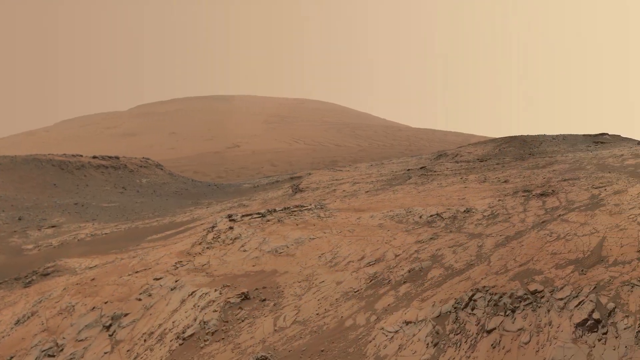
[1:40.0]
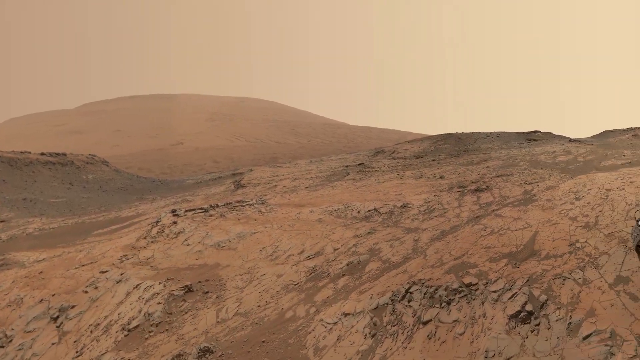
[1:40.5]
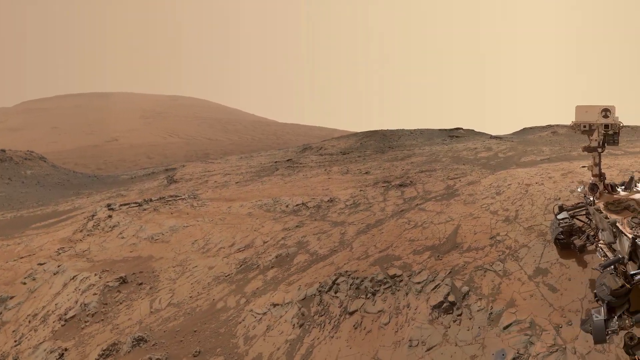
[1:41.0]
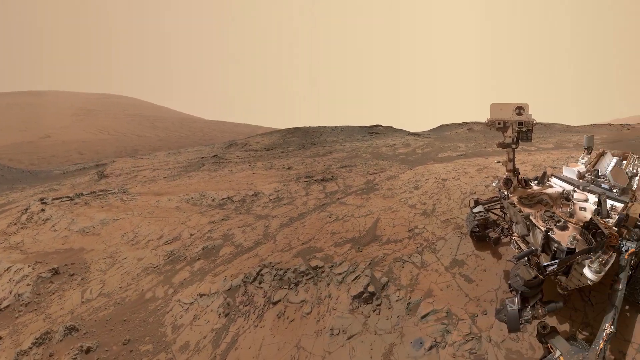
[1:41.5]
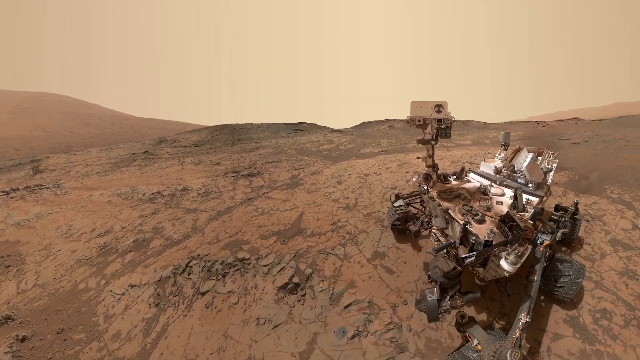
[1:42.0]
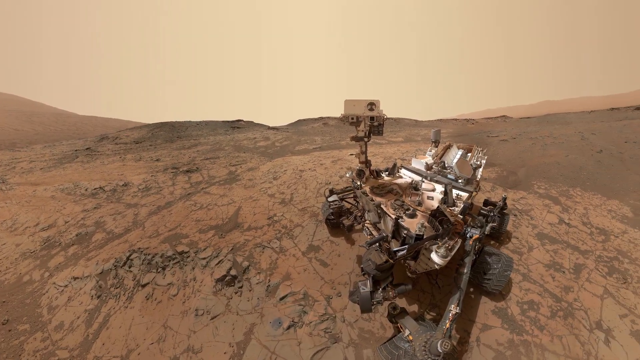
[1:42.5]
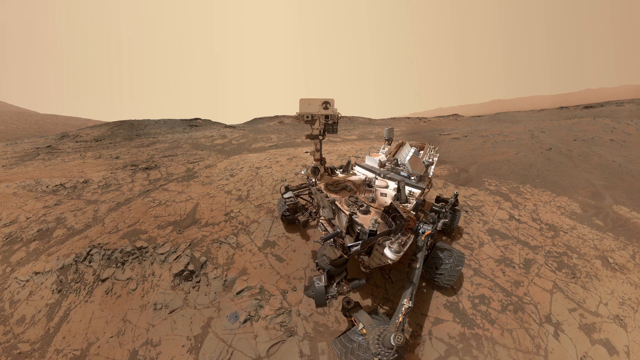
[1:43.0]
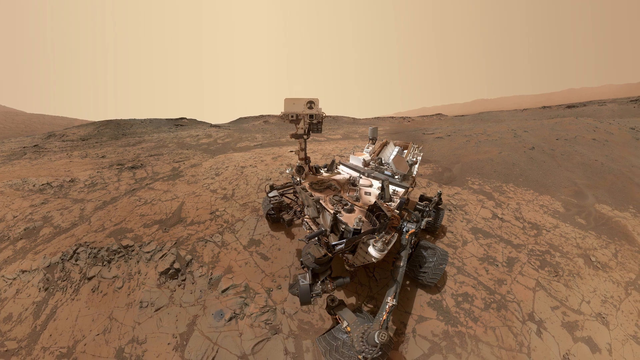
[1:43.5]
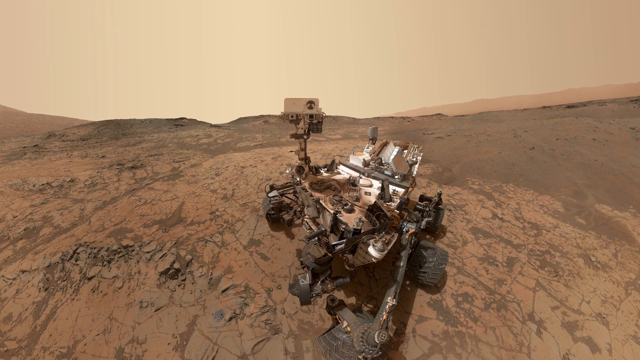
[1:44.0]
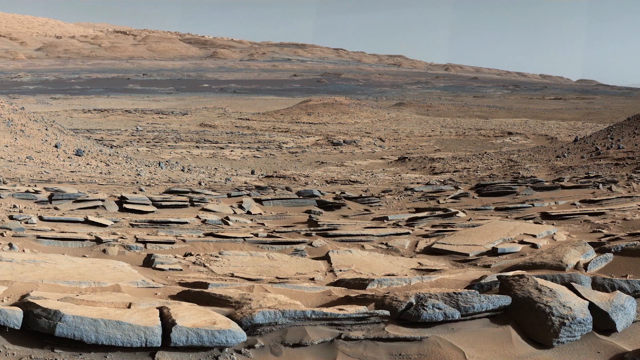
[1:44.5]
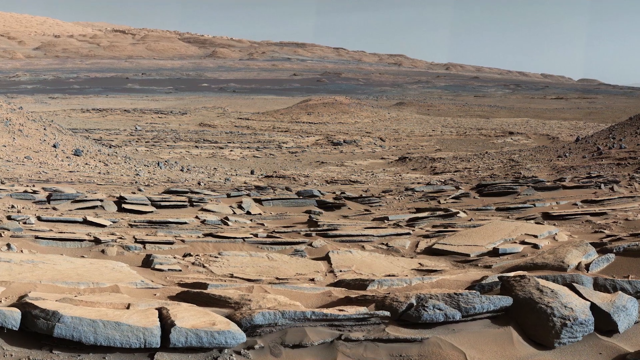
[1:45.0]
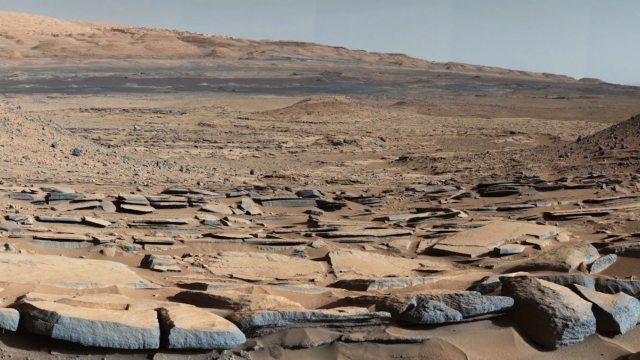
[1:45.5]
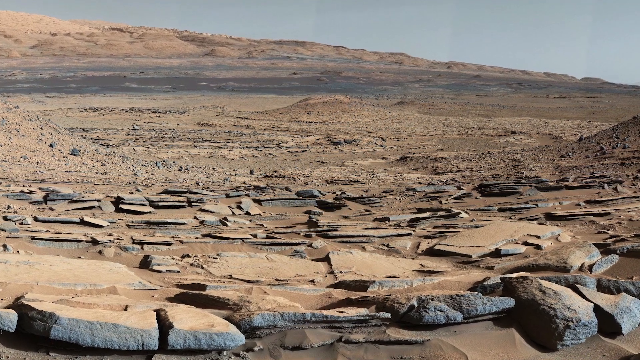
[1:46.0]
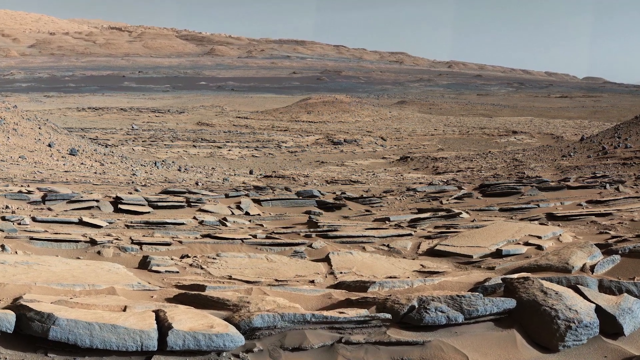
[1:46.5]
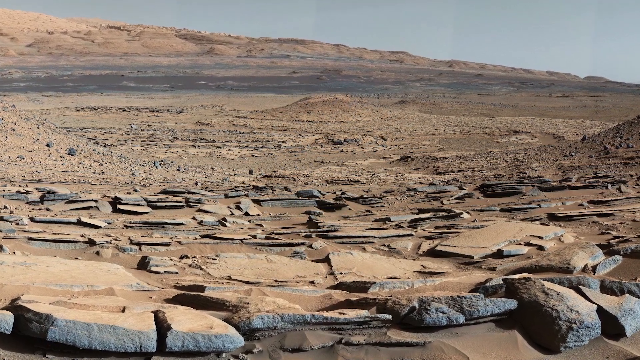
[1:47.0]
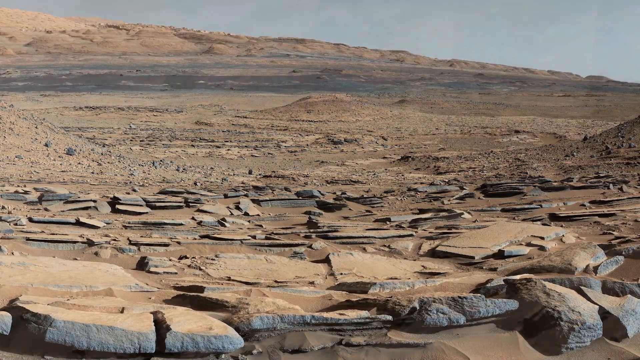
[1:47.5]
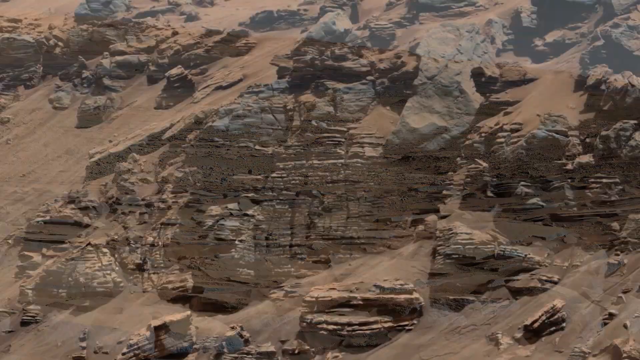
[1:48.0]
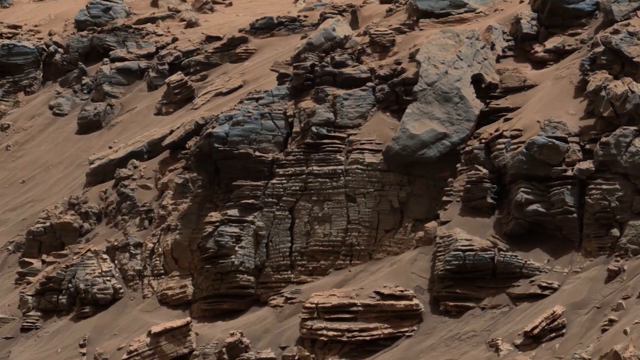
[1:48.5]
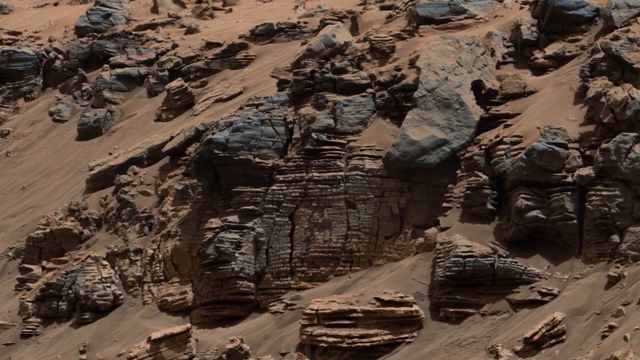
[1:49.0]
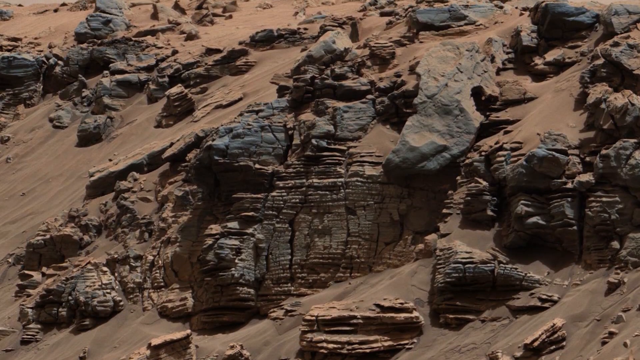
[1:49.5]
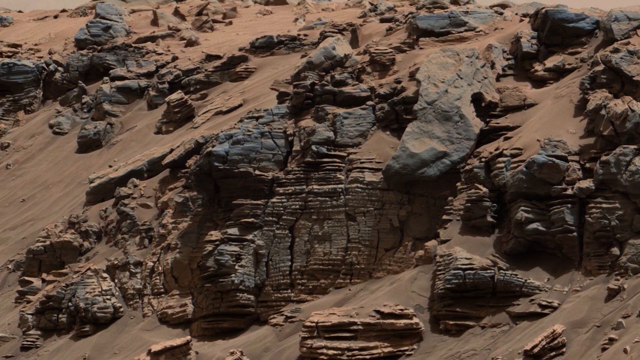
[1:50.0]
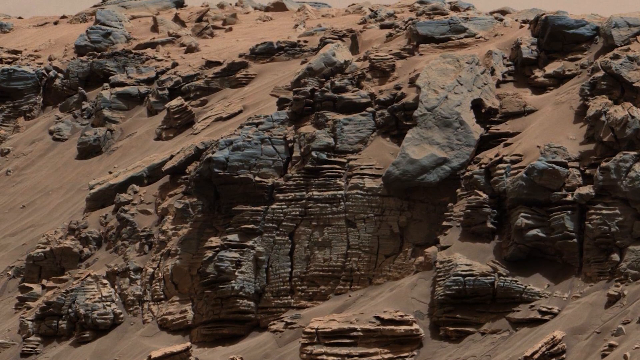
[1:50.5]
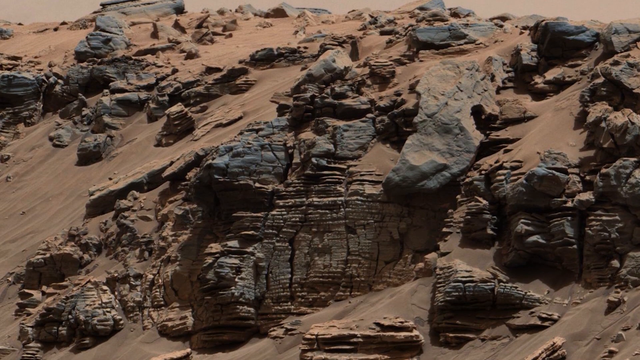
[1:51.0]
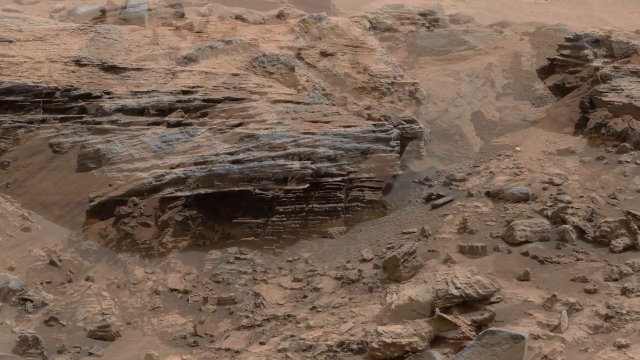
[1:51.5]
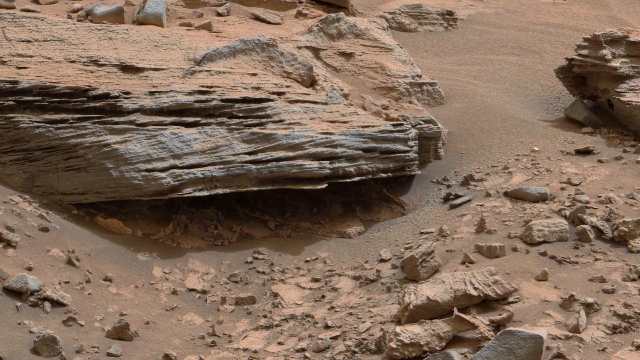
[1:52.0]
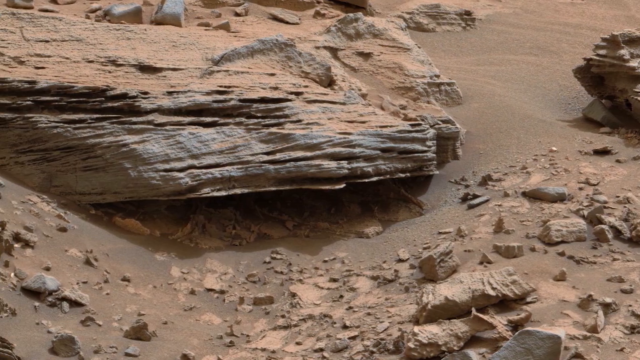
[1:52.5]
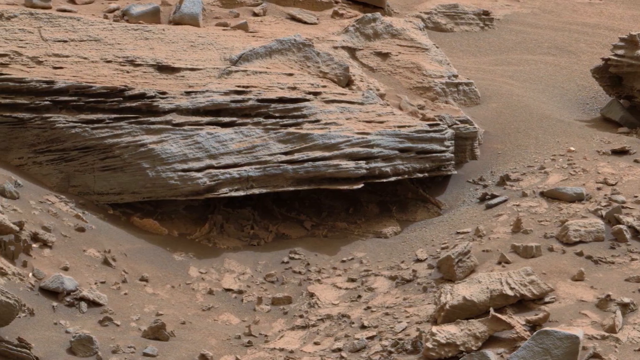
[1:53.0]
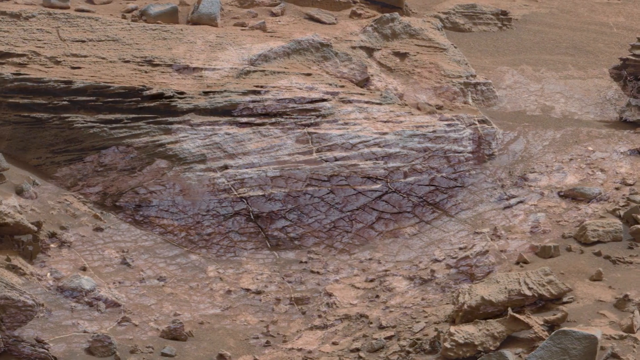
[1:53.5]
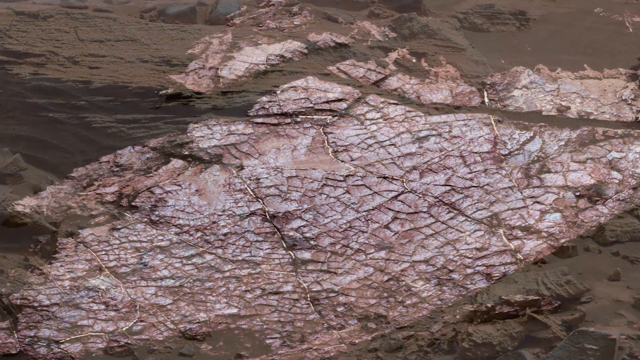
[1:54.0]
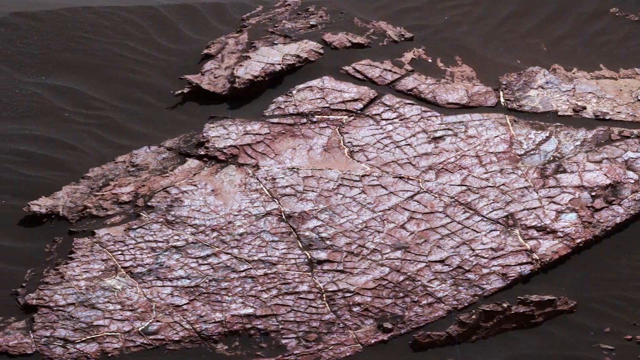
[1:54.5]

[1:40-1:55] Several different images from the surface of the planet, probably Mars, show a very barren, sandy and rocky landscape. The view pans to the right to the little rover robot. It is kind of sand covered, with a lot of silvery, shiny metal showing through the sandy covering. It has several dark gray rubber wheels and what appears to be a camera mounted on its front. Several shots taken by the rover of the planet's surface follow. One shows probably the back of the crater, with a slightly raised mountainous region in the background and, in the foreground, many flat, square or rectangle-like rocks that almost look like roof tiles; they are sandy, and gray underneath the sand. Another shot, probably of the crater side, shows many rocks and interesting formations with a lot of reddish brown sand around the rocks. The sequence ends with a shining gray surface that appears almost to have the texture of lizard skin, set against a dark gray, sandy background.